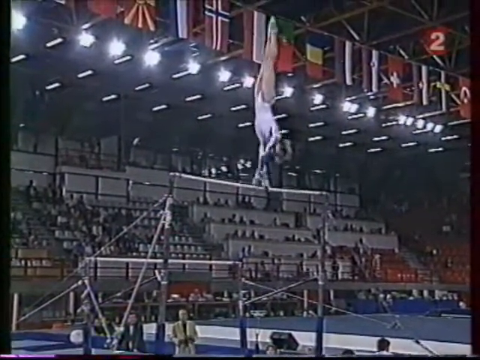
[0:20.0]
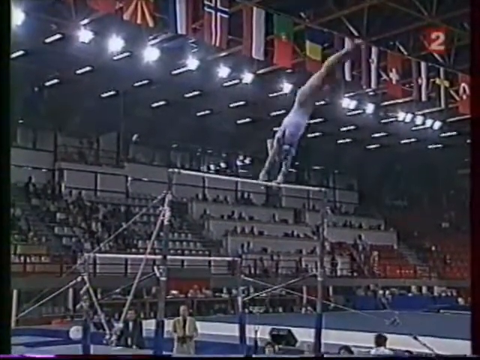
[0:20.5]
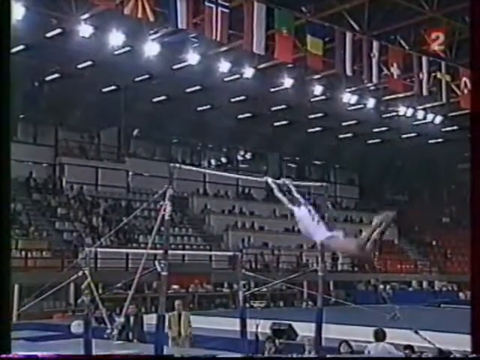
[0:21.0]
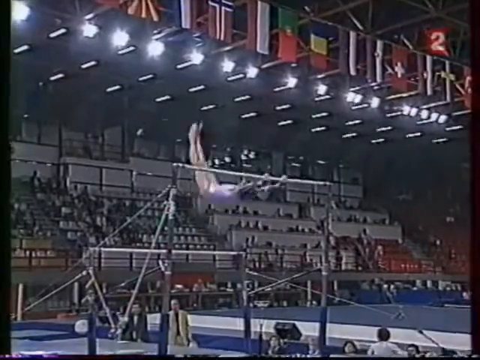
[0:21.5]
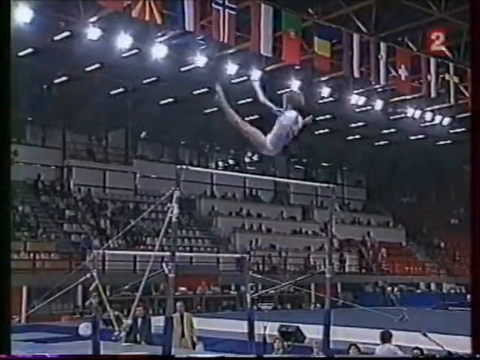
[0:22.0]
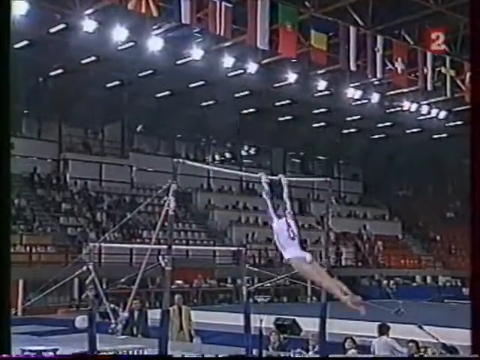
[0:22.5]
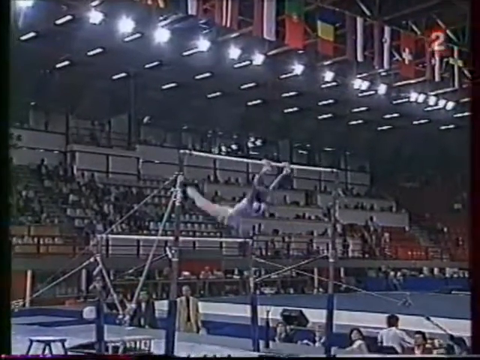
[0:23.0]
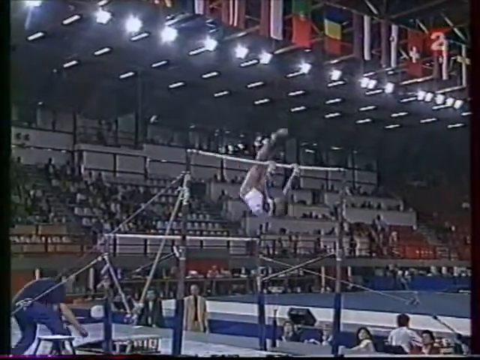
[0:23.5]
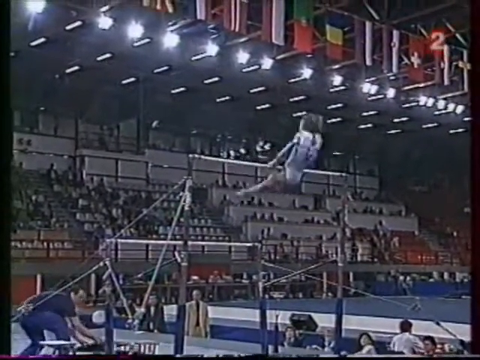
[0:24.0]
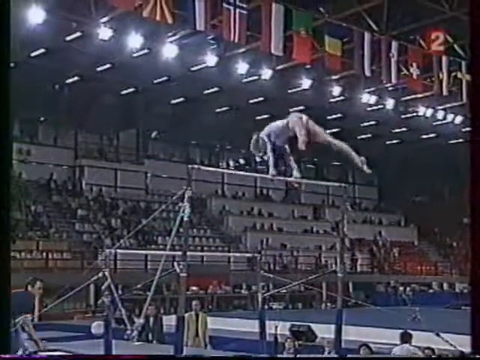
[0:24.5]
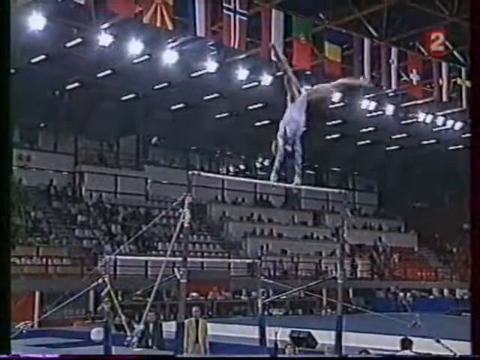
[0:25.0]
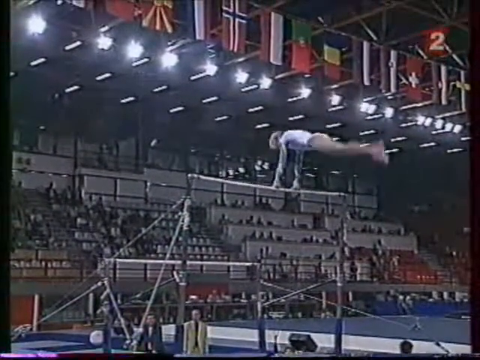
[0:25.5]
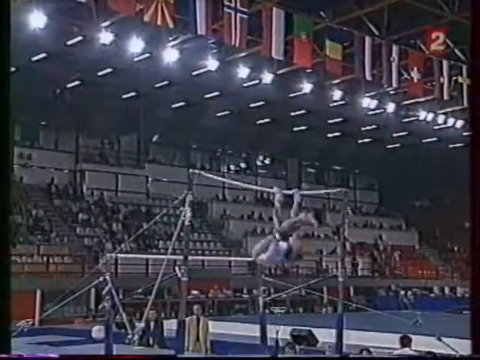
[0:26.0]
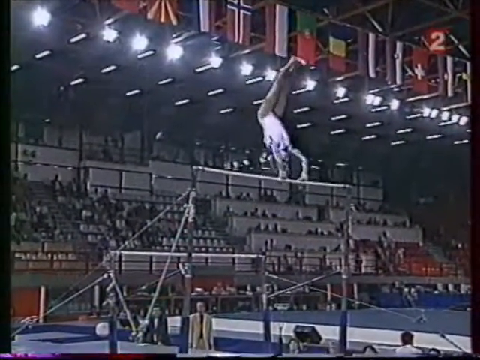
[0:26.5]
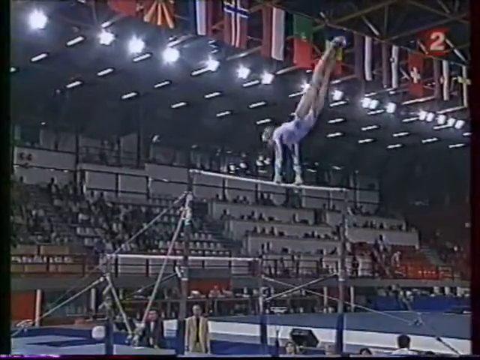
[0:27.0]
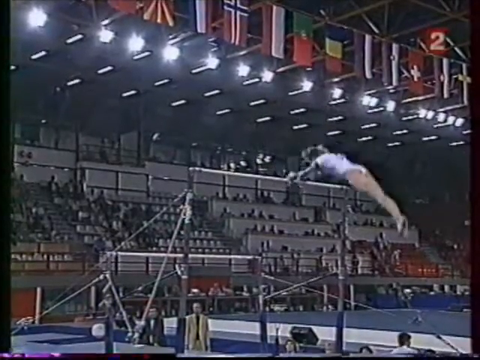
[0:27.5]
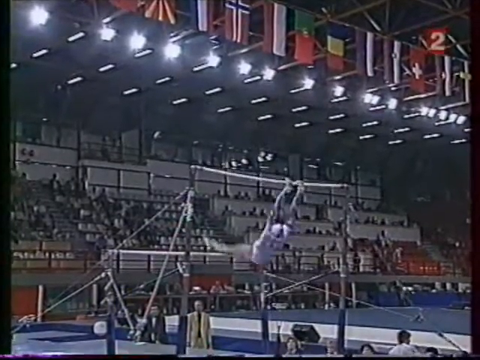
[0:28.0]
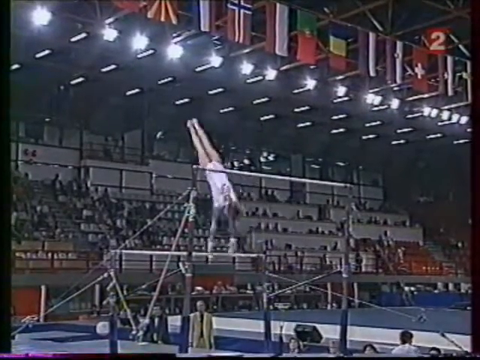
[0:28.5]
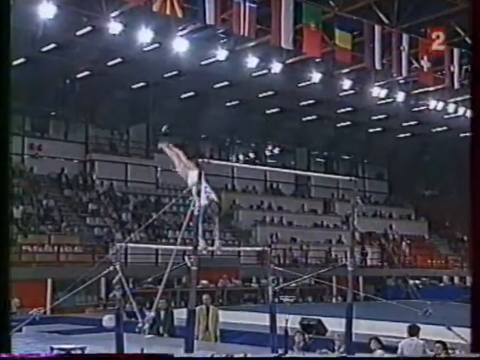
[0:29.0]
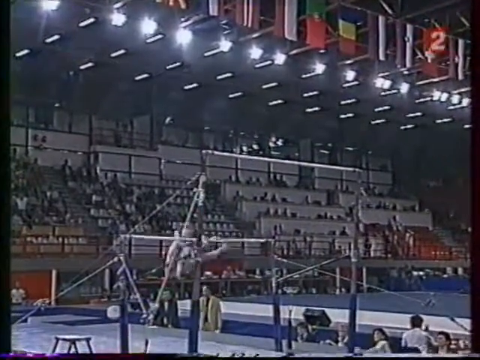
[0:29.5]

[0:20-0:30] The shot shows the set. Round floodlights are at the top, and in front of them flags of various countries hang down from the rafters, some blue, yellow and red, including Spanish, Finland and Austria; about 12 or 15 are visible. The lower bar is a white bar running horizontally. A bunch of cables run out from the side at an angle and are secured down, apparently about four or five on each side, running to the tall and short poles. The gymnast flips herself over the bar and swings down; when her body is about level with the high bar, she flips herself back and does a split, catching herself on the back side. Somebody comes down at the bottom and moves something. A couple of people seem almost part of the routine: a man in a suit jacket and a man on the left who is standing there. She then gets the low bar, comes down and starts doing a couple of twists on it.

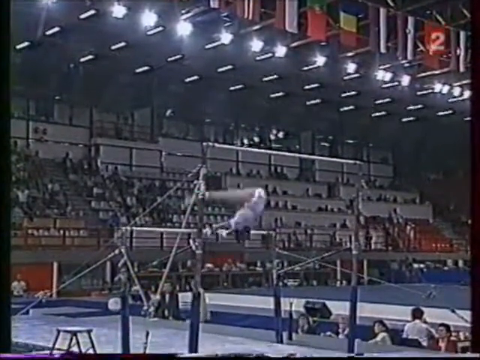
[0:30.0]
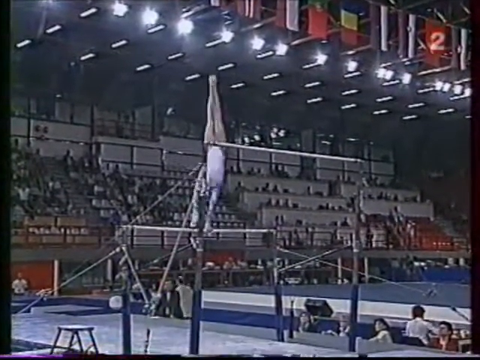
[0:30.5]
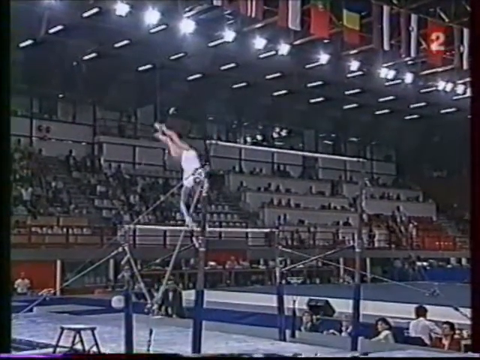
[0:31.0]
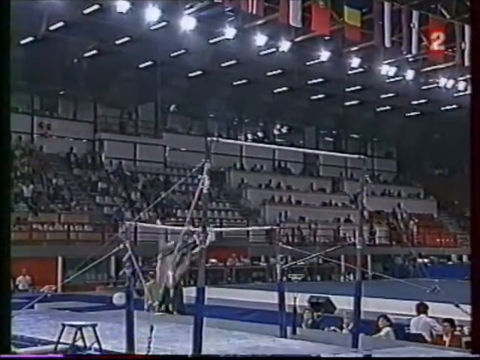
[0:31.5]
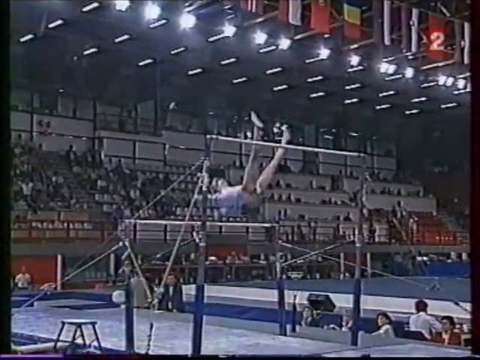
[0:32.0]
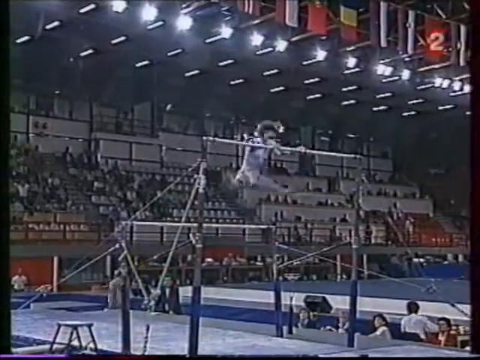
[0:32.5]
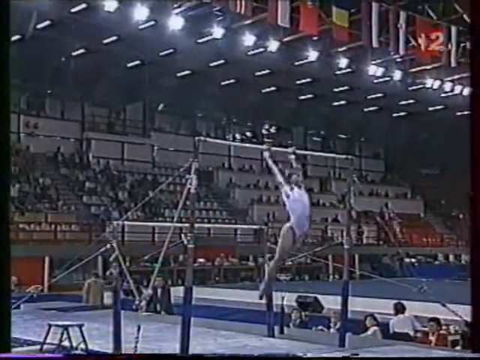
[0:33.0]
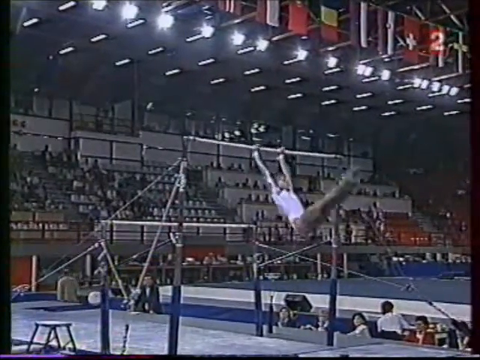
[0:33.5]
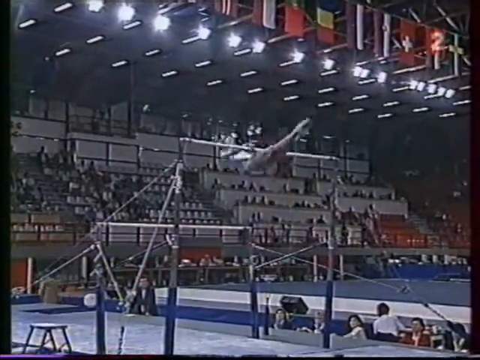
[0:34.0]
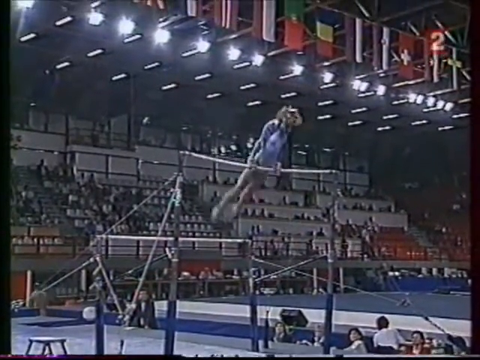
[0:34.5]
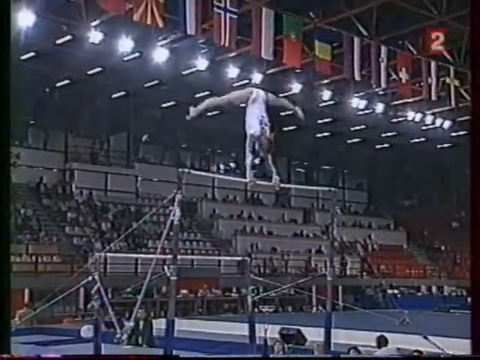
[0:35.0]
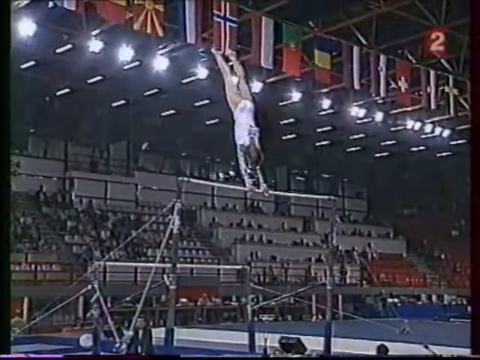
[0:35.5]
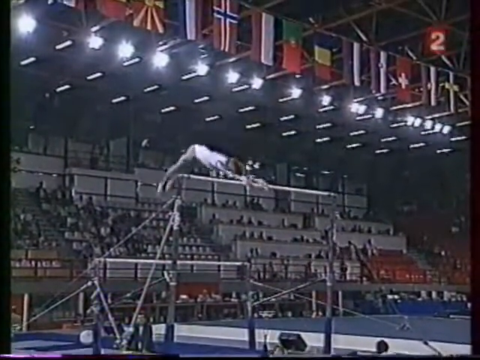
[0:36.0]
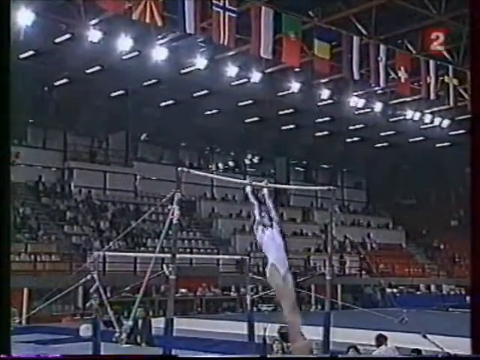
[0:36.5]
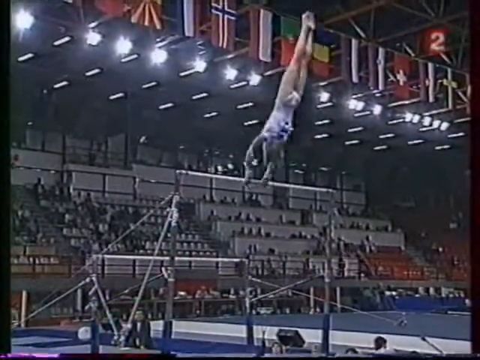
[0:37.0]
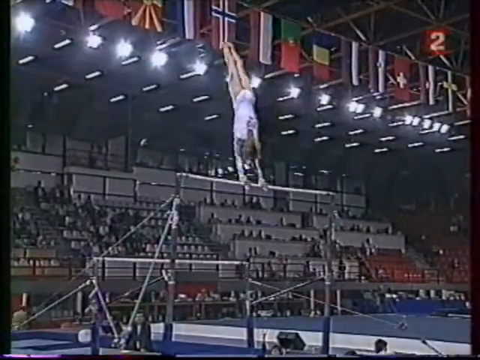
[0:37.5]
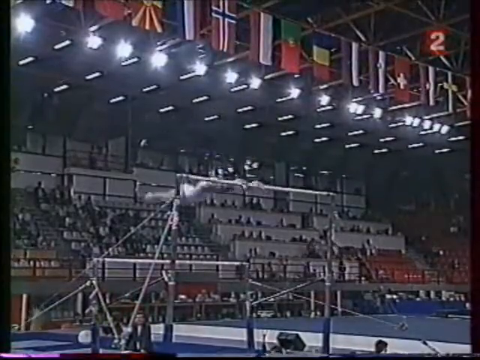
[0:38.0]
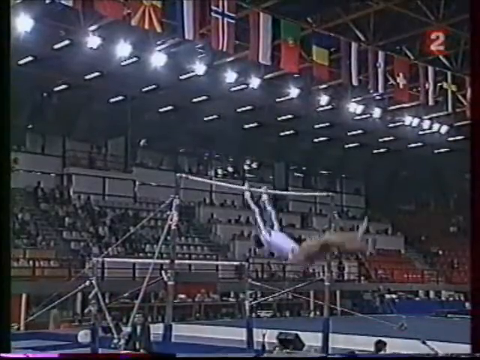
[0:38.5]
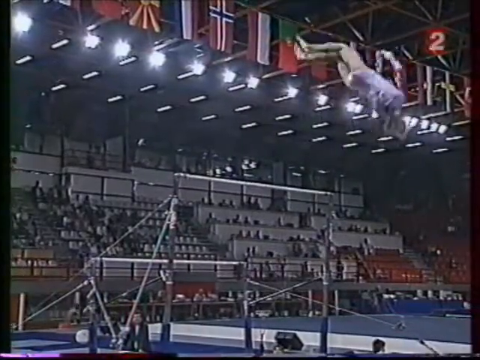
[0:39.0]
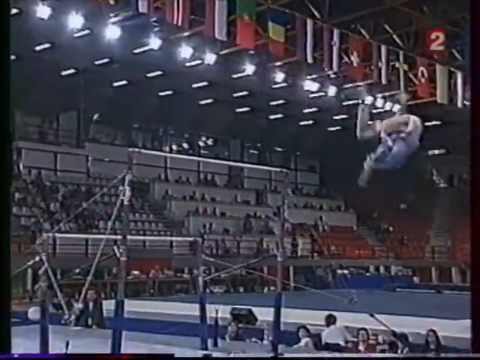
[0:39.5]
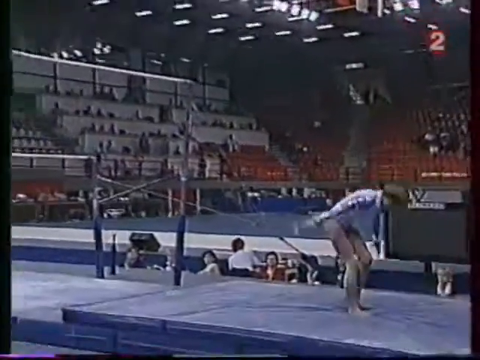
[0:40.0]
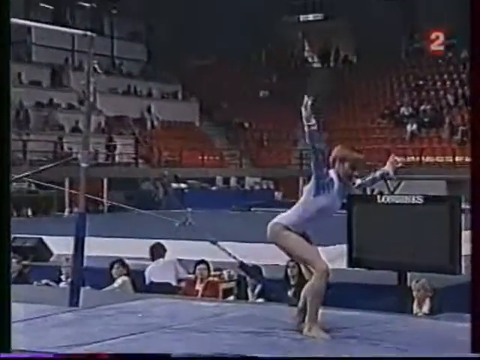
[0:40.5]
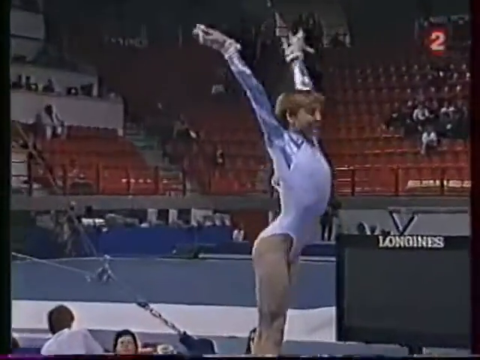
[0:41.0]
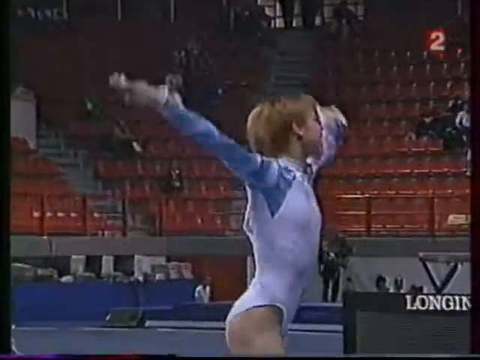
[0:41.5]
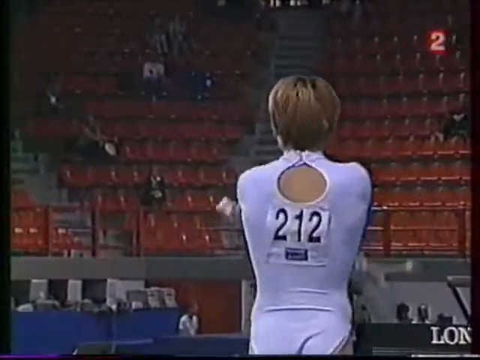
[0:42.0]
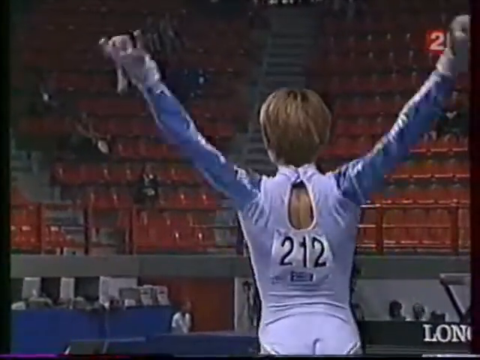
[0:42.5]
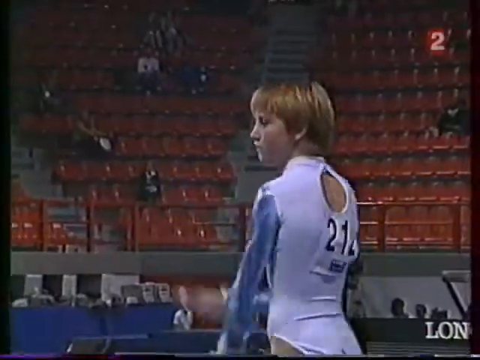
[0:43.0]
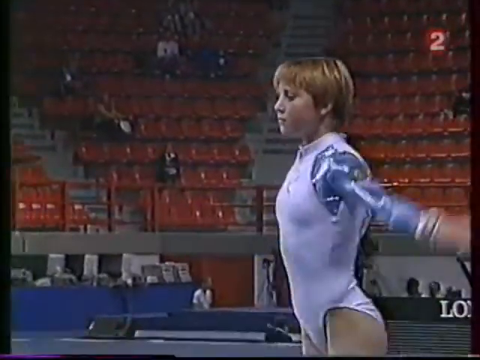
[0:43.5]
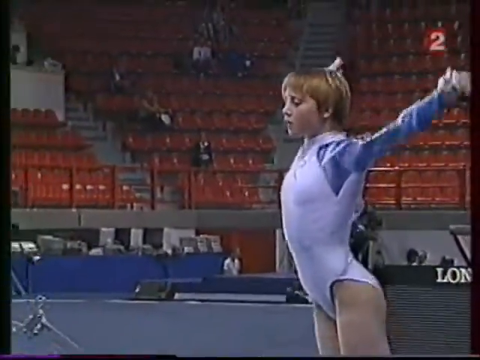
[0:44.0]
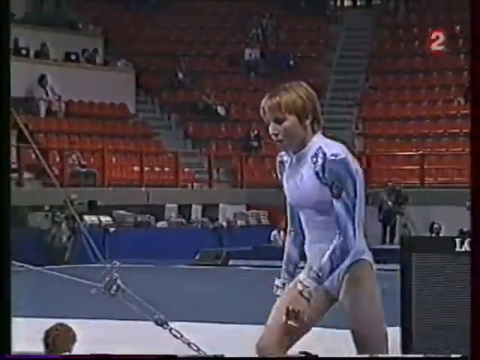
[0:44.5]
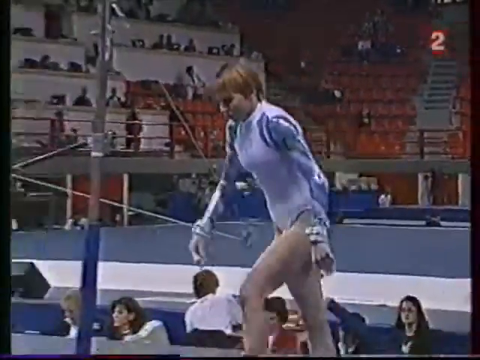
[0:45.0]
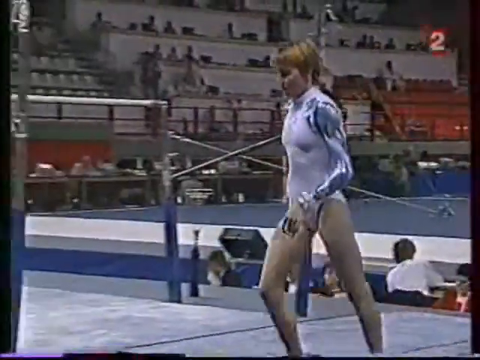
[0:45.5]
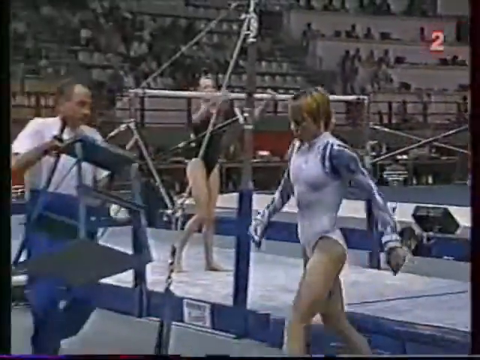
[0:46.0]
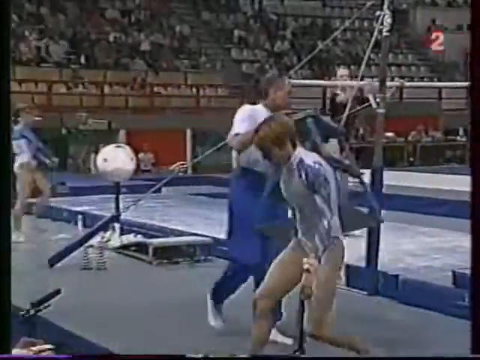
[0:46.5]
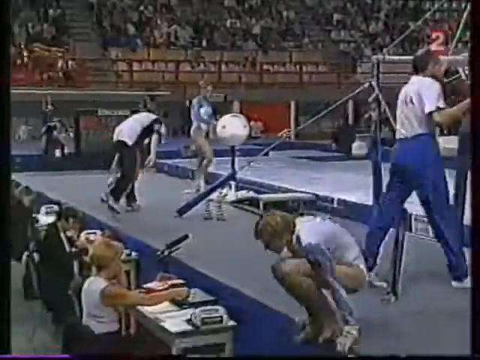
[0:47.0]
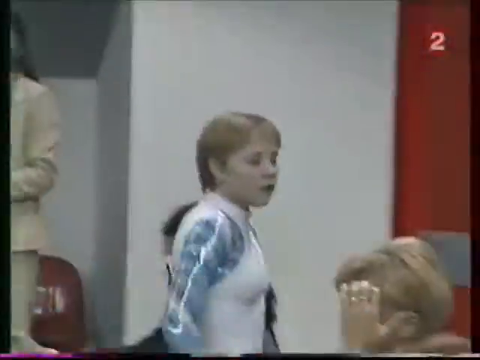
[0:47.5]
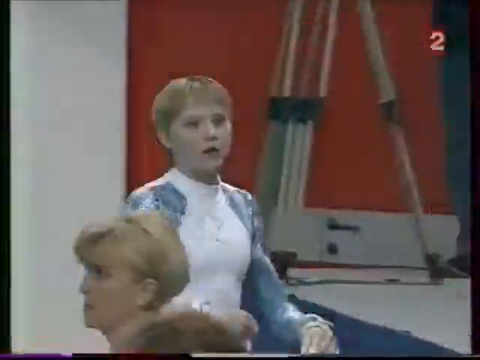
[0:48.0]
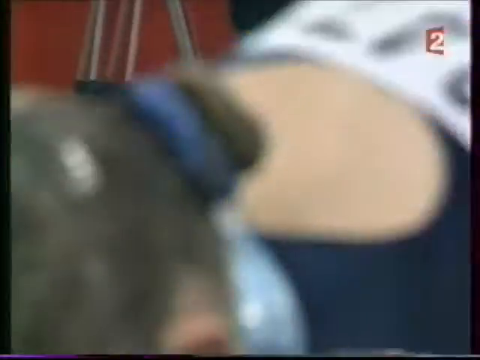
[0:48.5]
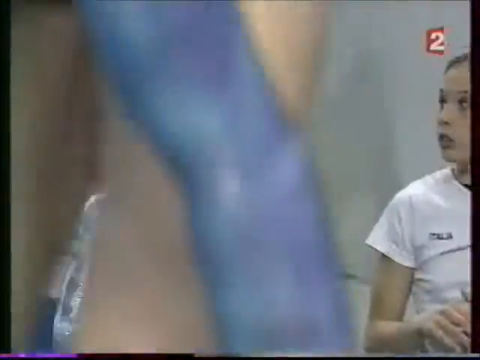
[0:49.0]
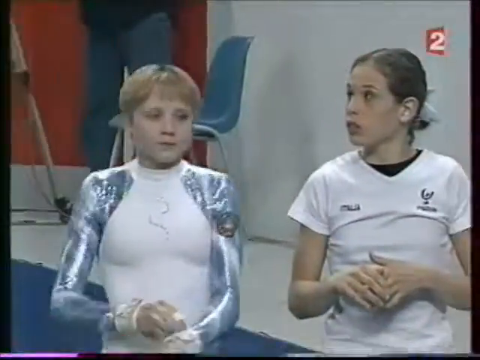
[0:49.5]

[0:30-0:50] Holding on to the shorter bar, the gymnast does a couple of turns with her hands, a couple of 360s, guiding one hand to the other. She does the splits as she goes underneath the short bar, thrusts herself toward the high bar while in the splits and catches it. She comes back down the other way and pulls the bar into her stomach again in a split, apparently to gain momentum, then does two complete forward rotations with the bar. She does a bunch of flips in the air, possibly axels, spinning around with her knees tucked into her chest. She comes out pretty quickly and sticks the landing without seeming to stumble at all. She seems to bend her body back with her arms bent back and her head thrown back, and probably beams around. She does a quarter turn, then another quarter turn, and walks off. Beside her, a man appears to be preparing some kind of step ladder. A couple of angles show her walking among people right beside the high bars, and then scorecards flash at the bottom of the screen.